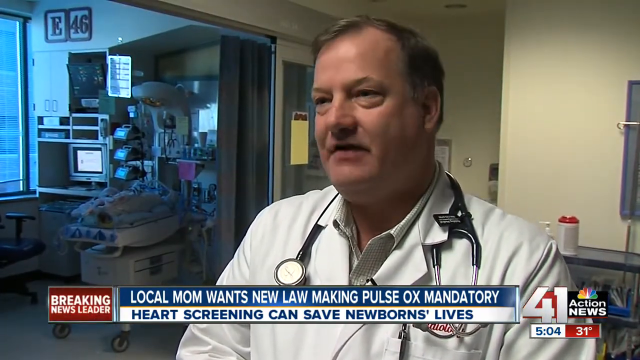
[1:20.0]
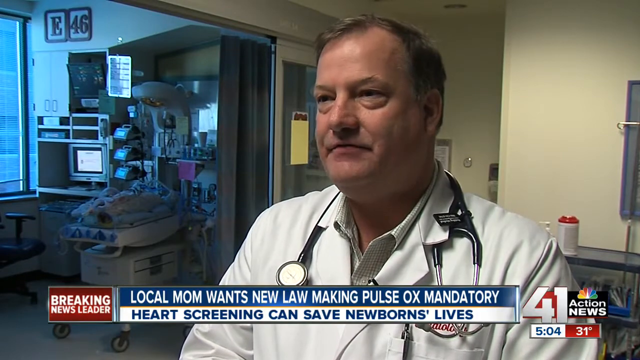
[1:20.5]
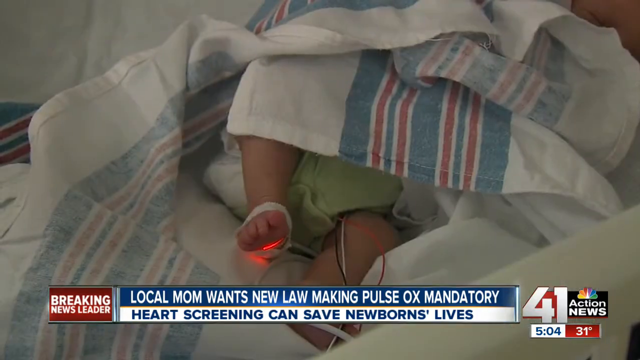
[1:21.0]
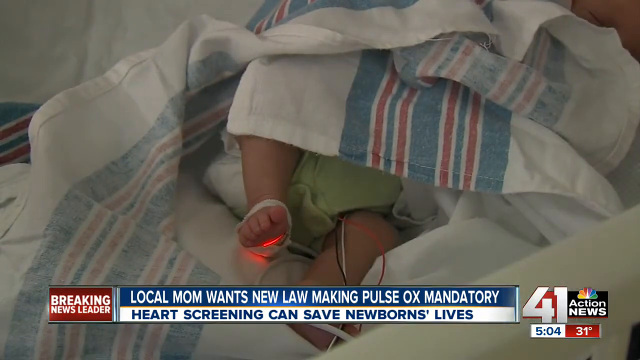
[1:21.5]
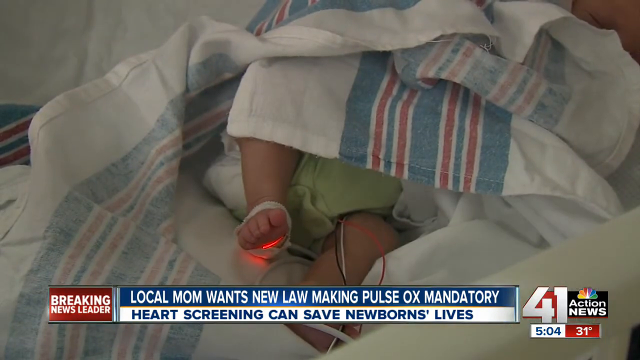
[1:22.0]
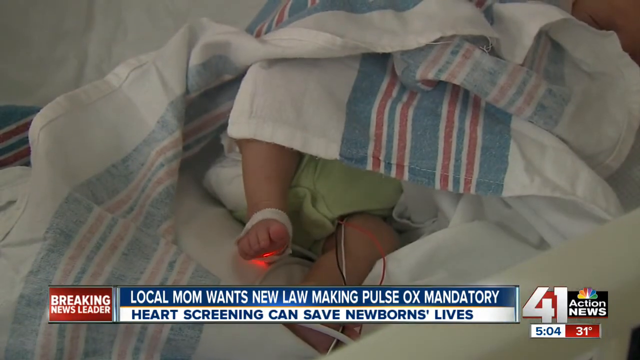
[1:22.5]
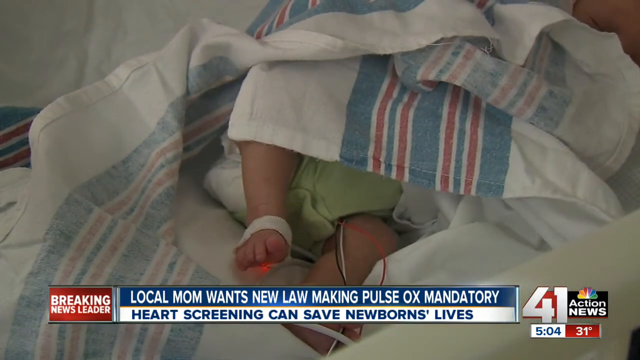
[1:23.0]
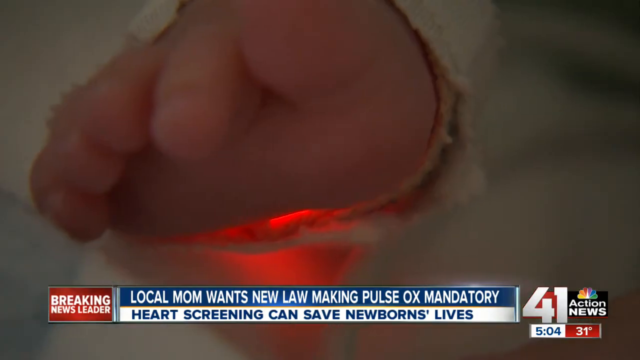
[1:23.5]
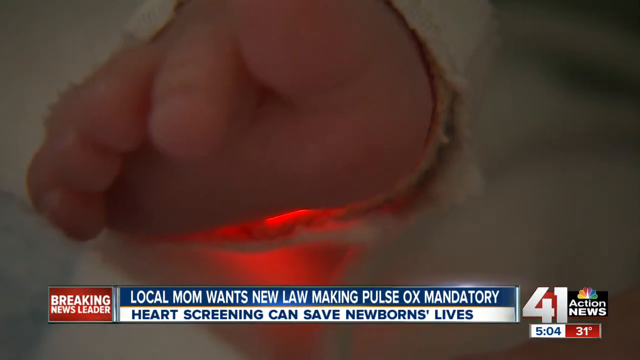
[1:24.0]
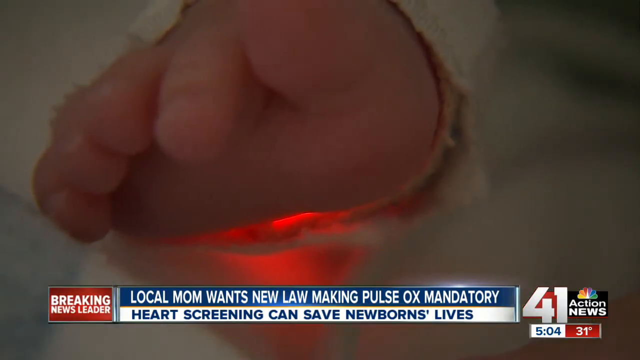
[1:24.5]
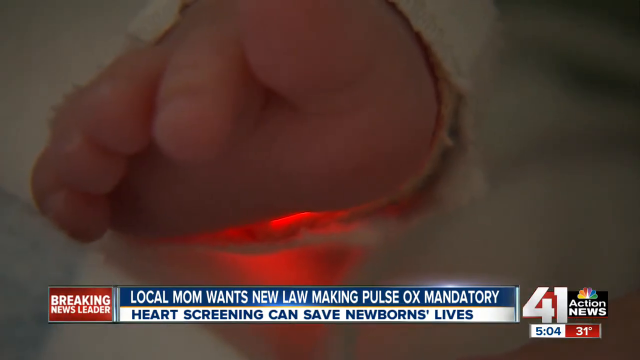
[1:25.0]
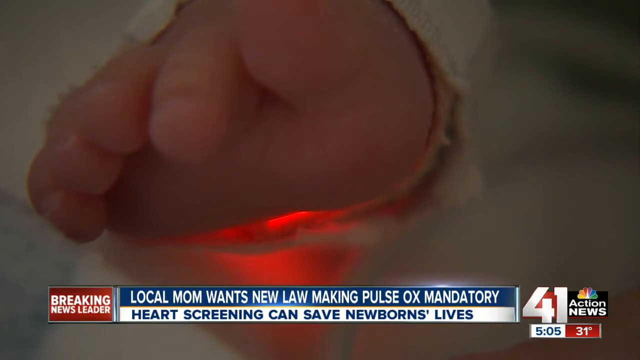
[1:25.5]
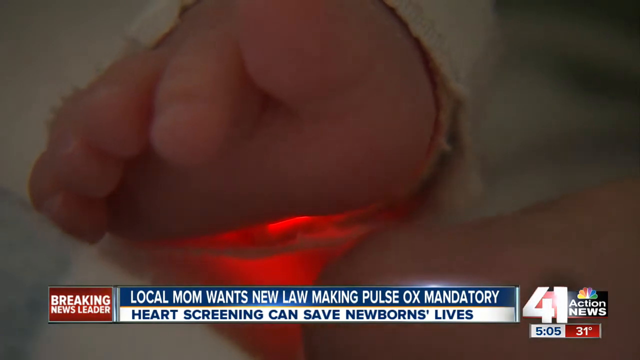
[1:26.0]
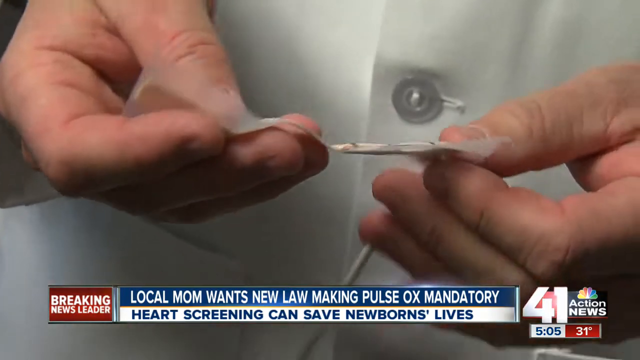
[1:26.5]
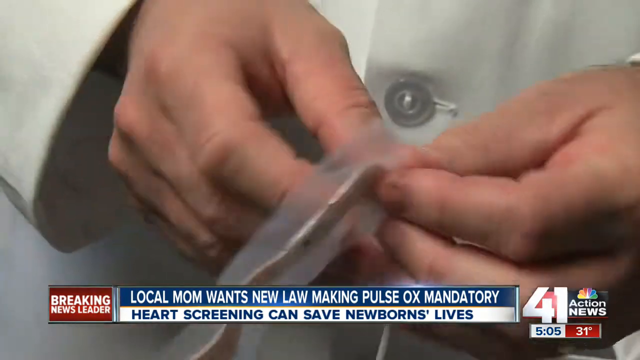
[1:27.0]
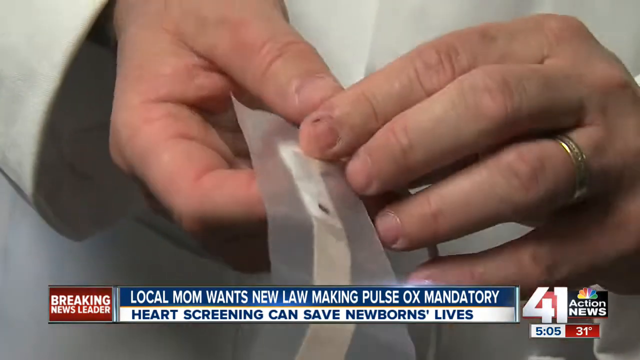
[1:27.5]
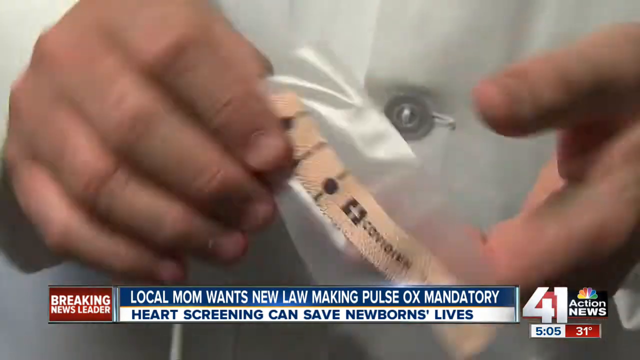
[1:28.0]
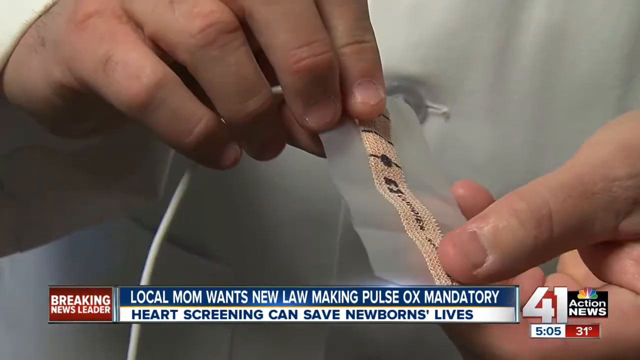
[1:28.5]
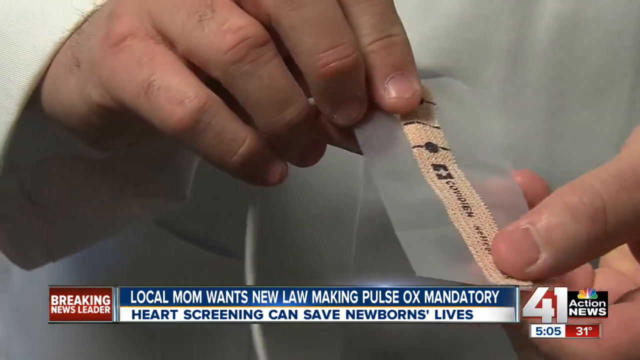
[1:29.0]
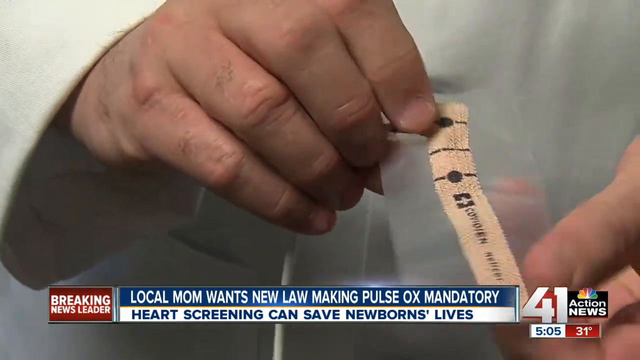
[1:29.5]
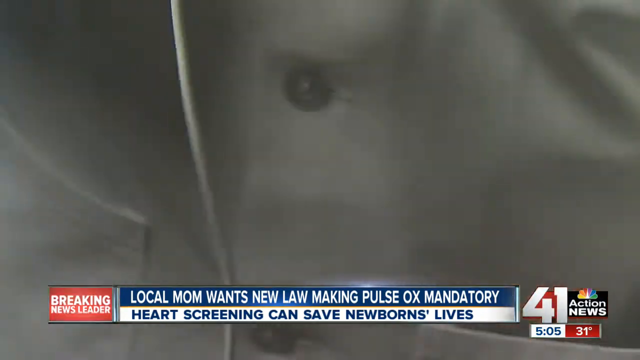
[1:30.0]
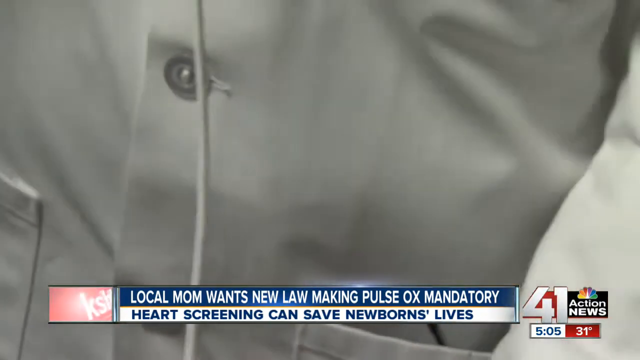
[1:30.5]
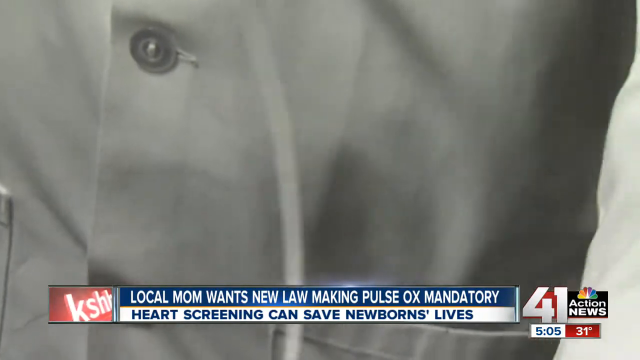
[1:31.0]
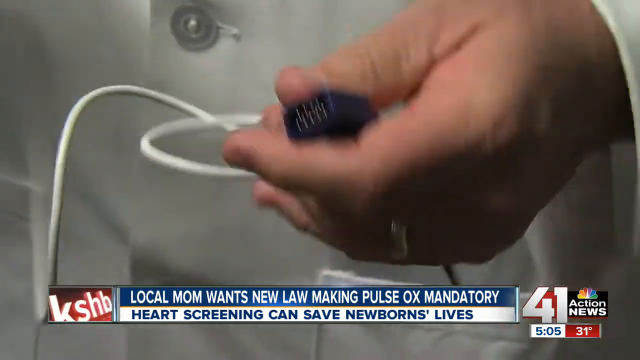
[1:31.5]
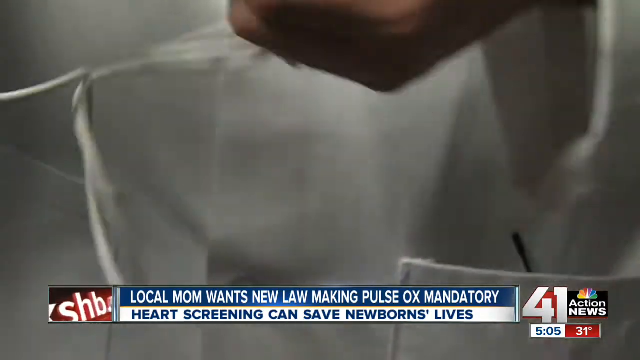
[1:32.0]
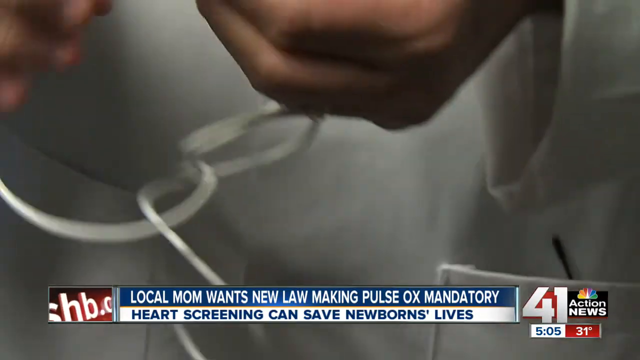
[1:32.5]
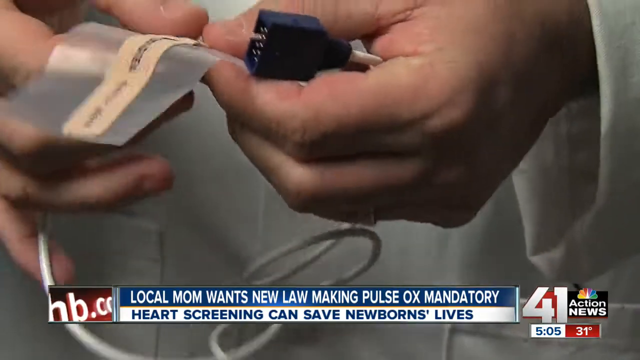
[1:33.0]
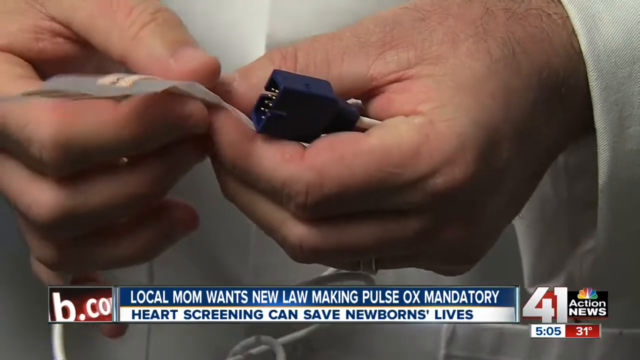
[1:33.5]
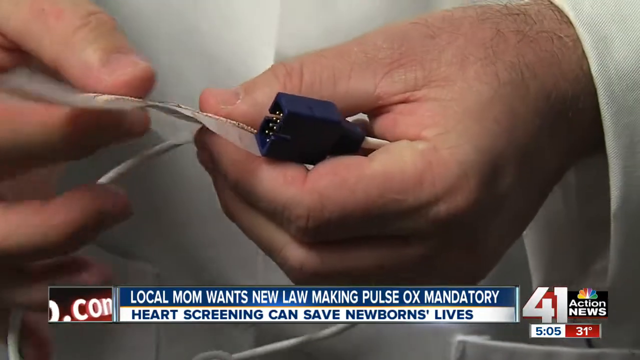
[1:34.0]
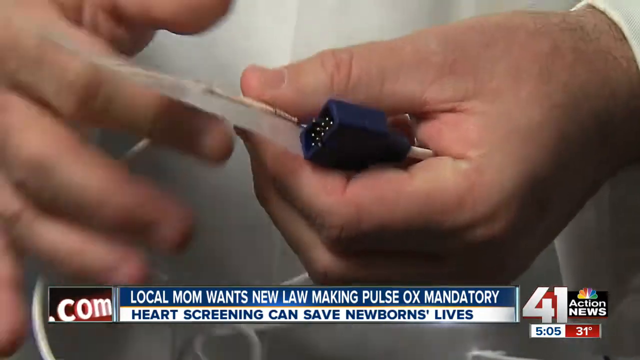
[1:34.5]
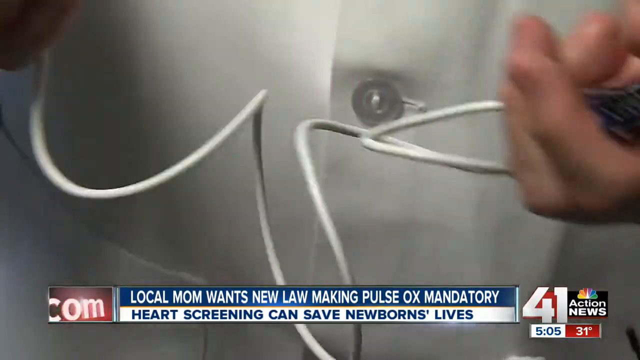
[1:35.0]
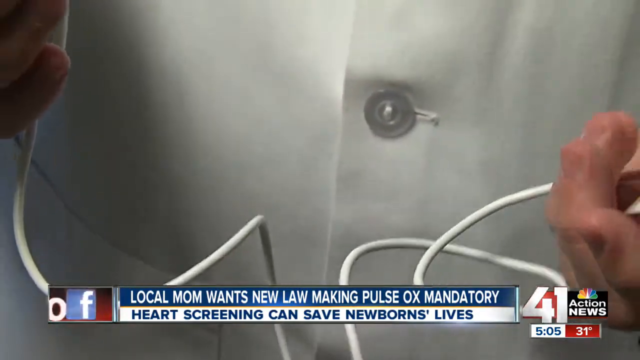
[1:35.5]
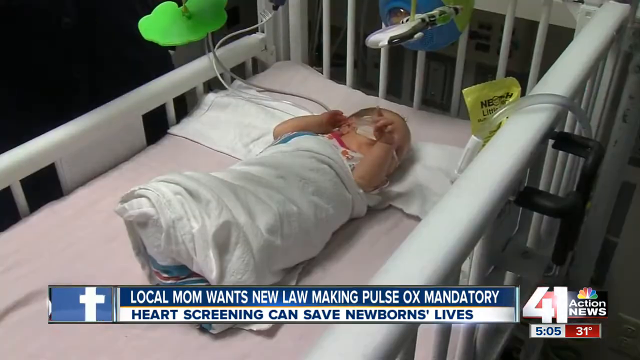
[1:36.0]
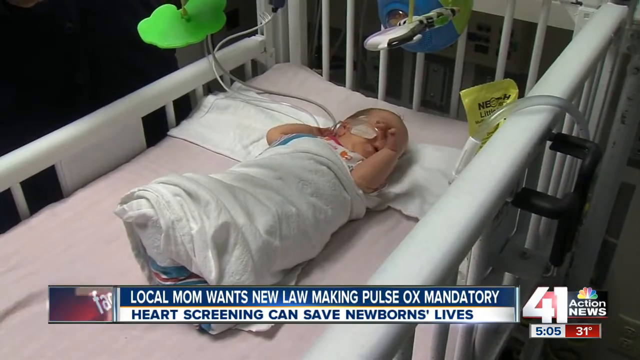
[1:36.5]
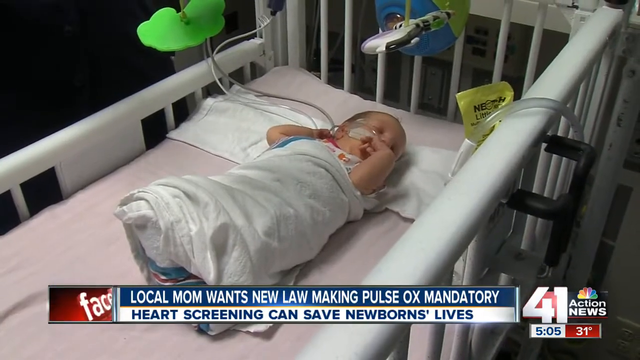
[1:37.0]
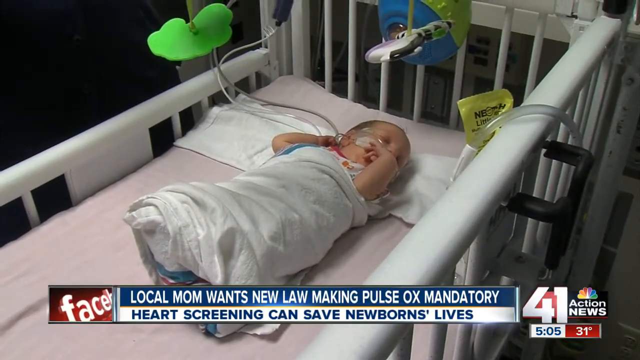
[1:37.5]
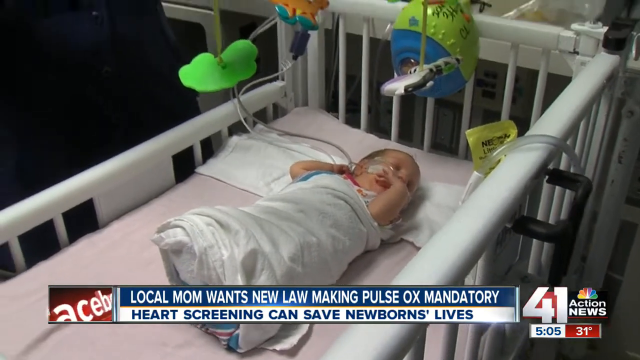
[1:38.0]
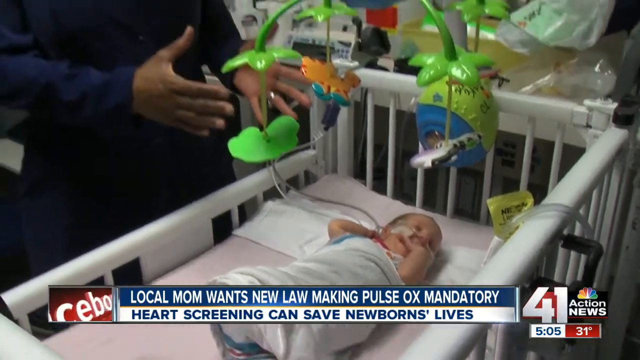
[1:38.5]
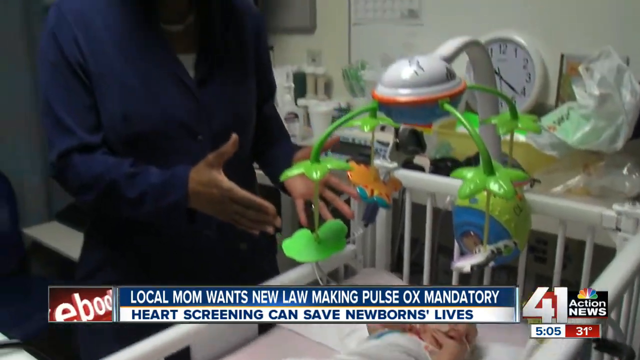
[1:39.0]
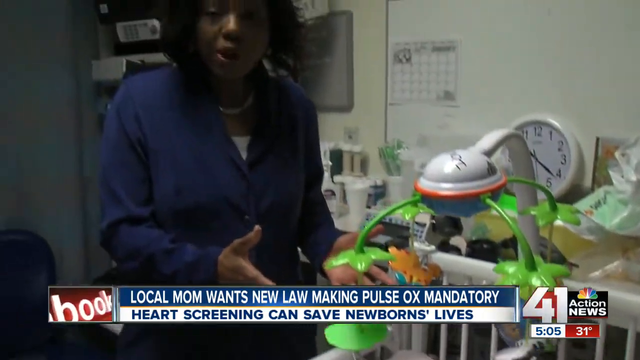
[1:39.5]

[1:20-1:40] The male doctor talks while looking at the camera, giving his view on the issue. Next, a newborn baby's leg is shown with a strip of bandage that has a red light on it. The hands of a white person hold another strip that is attached to a wire. Then a newborn baby is shown in a pram with toys around it and pipes attached to the baby's nostrils; the baby appears to be sleeping in a cot with a pink sheet and a white pillow. The room has a white clock, a whiteboard, other shelves behind, and a shelf with items. A woman then appears in the scene.